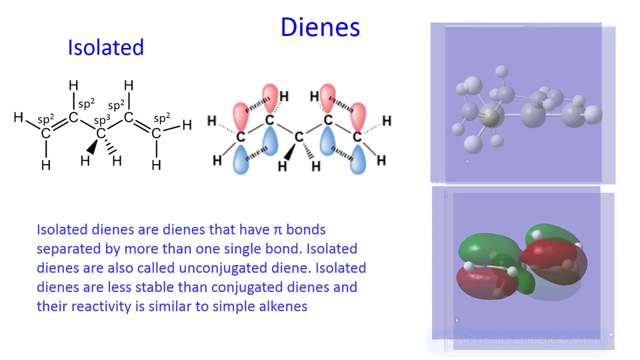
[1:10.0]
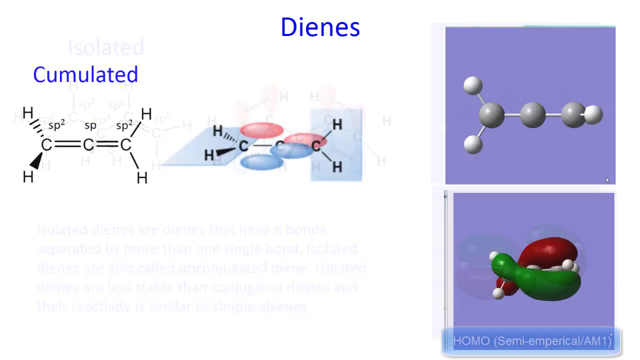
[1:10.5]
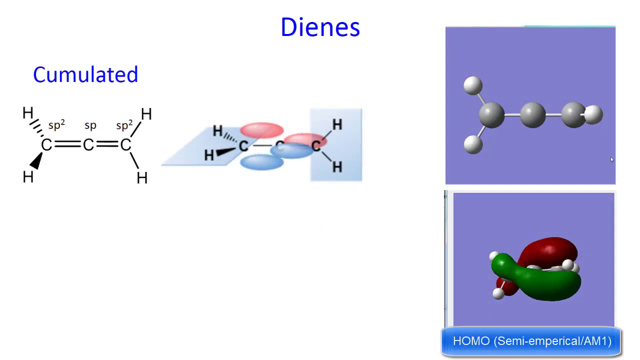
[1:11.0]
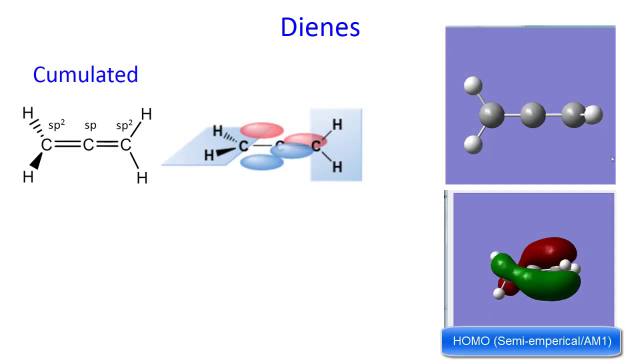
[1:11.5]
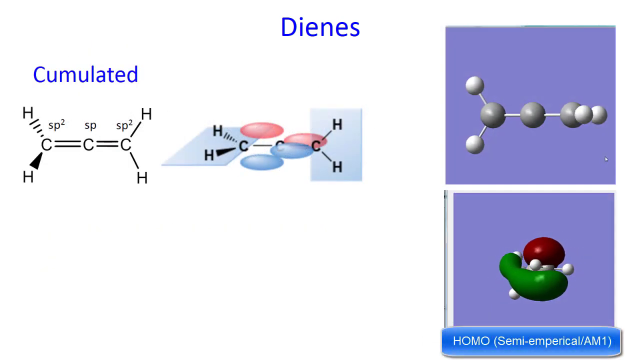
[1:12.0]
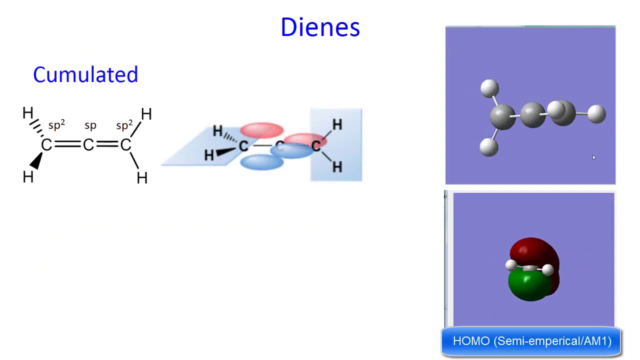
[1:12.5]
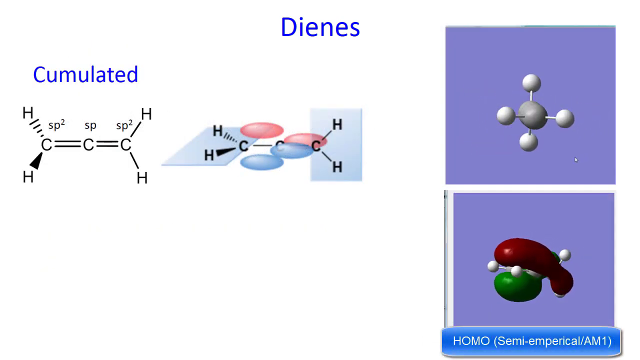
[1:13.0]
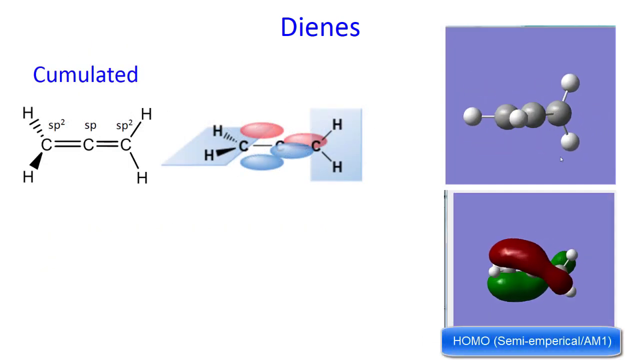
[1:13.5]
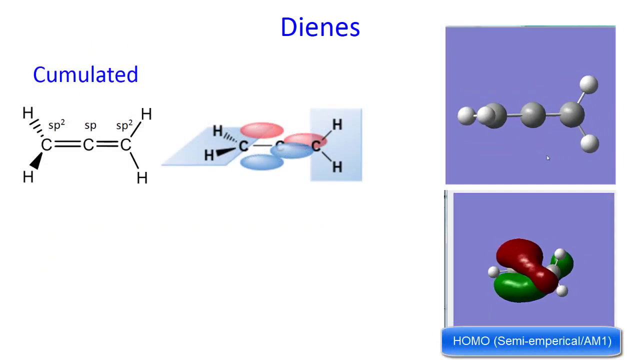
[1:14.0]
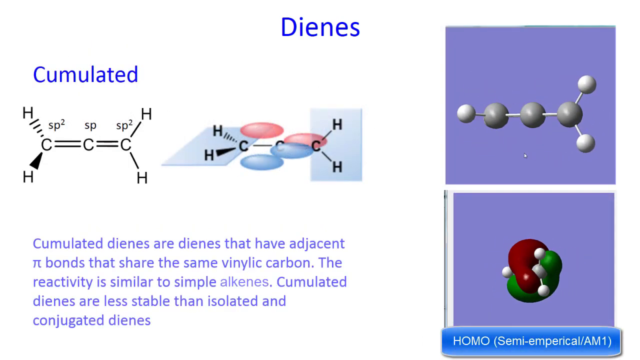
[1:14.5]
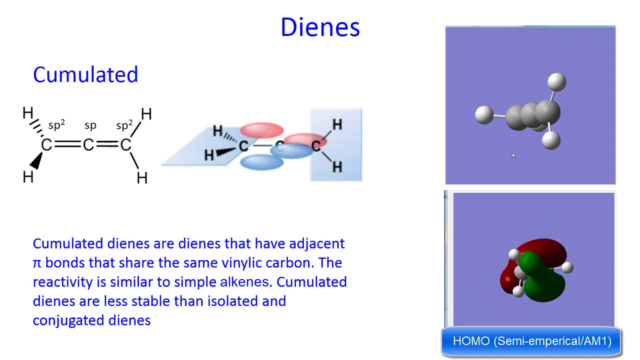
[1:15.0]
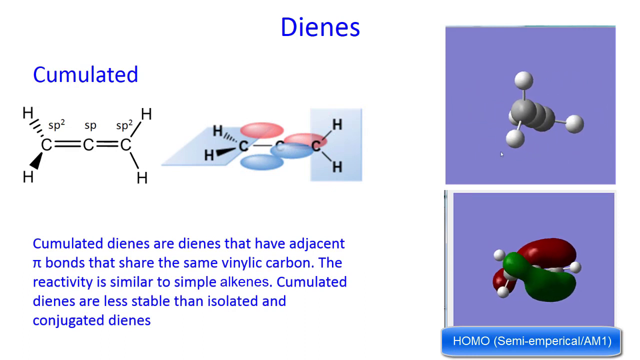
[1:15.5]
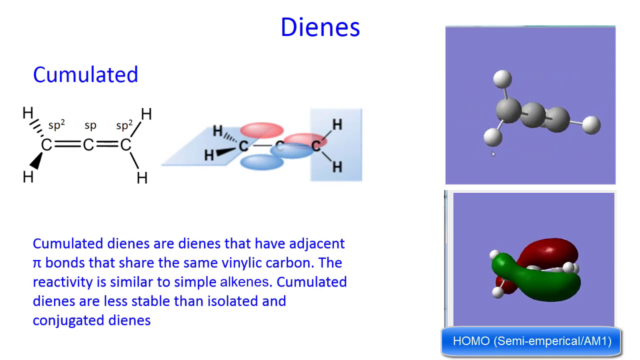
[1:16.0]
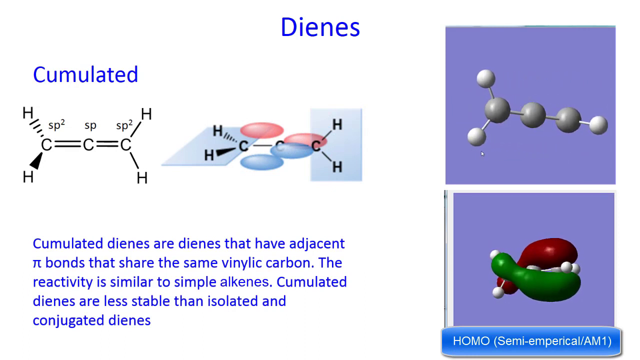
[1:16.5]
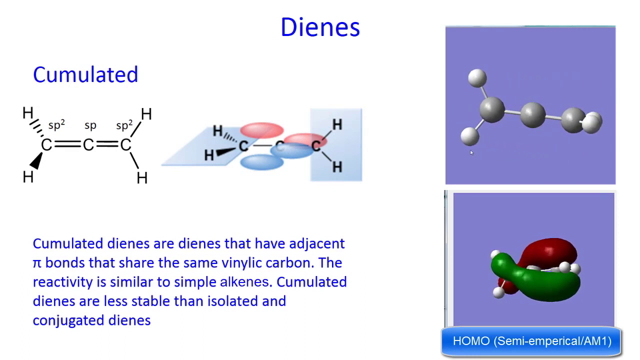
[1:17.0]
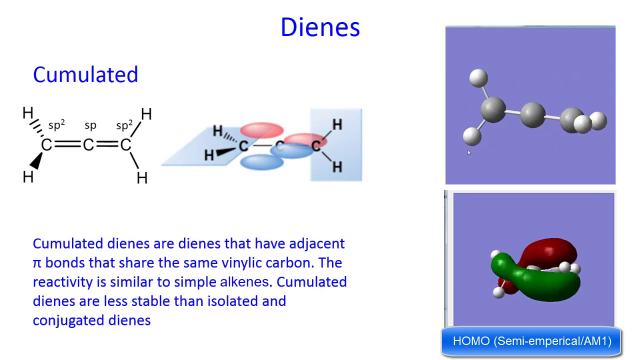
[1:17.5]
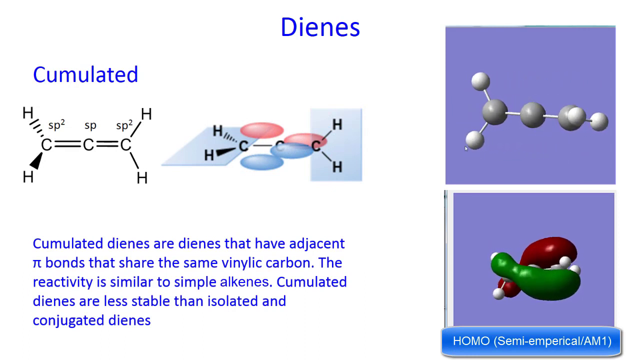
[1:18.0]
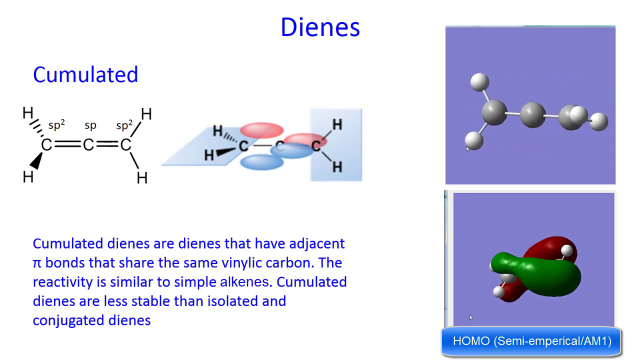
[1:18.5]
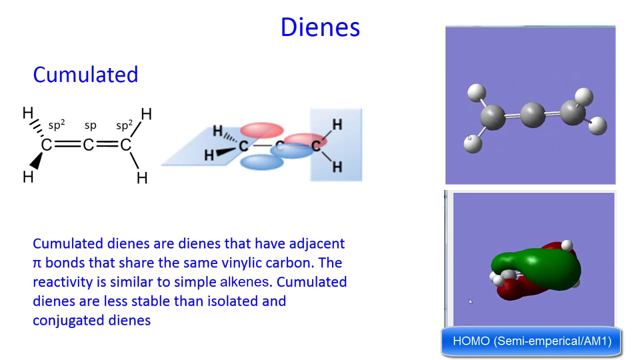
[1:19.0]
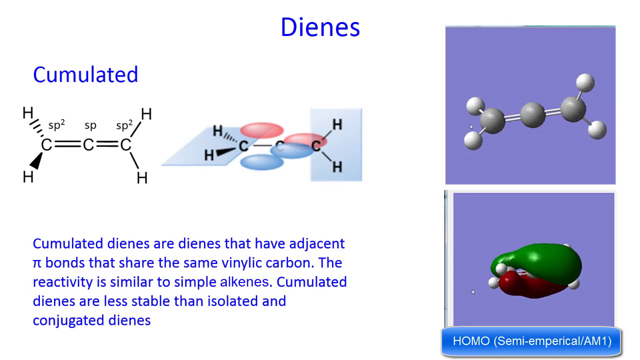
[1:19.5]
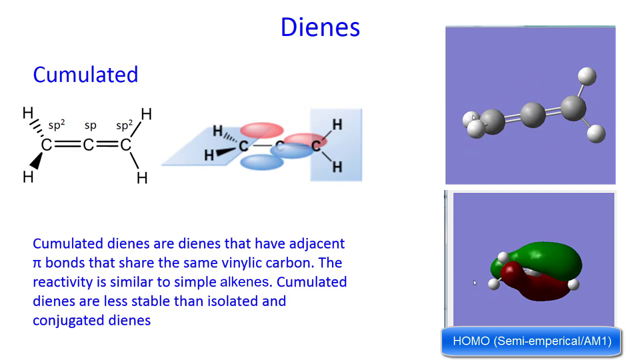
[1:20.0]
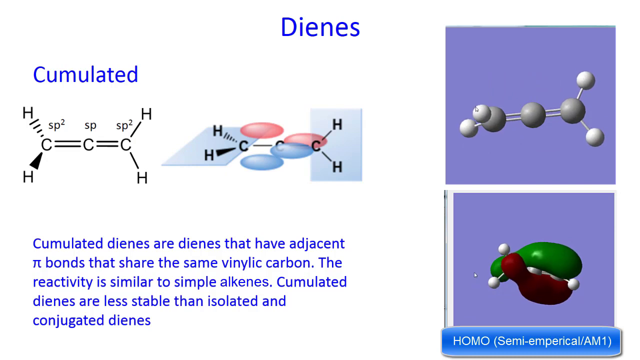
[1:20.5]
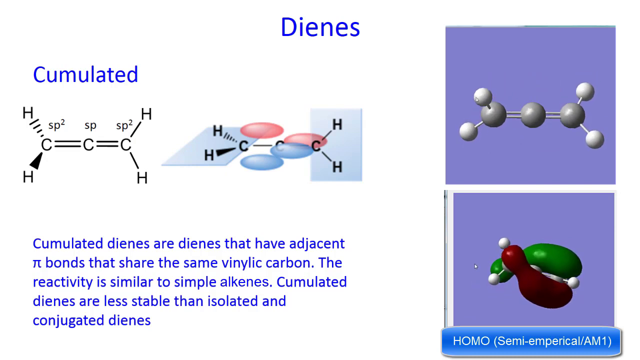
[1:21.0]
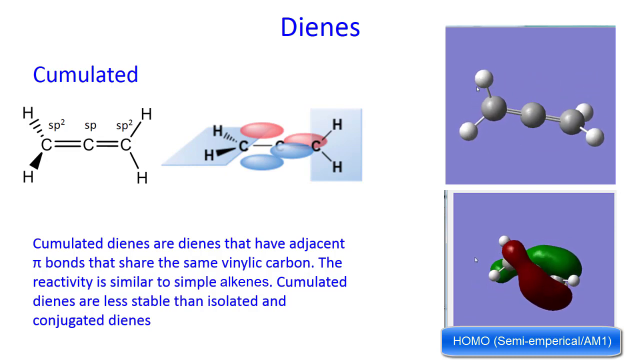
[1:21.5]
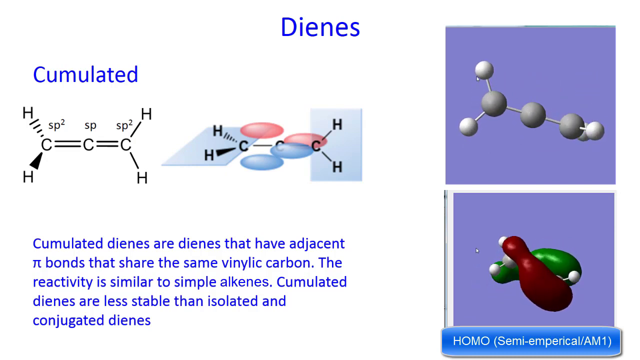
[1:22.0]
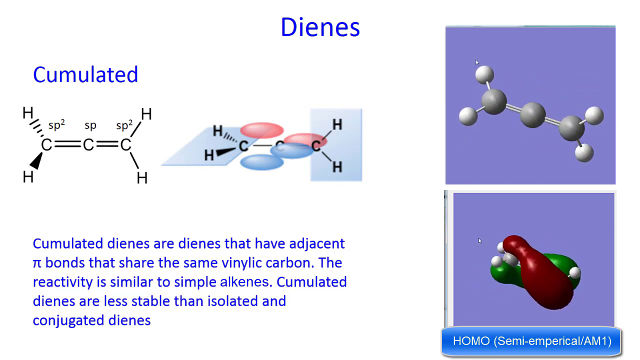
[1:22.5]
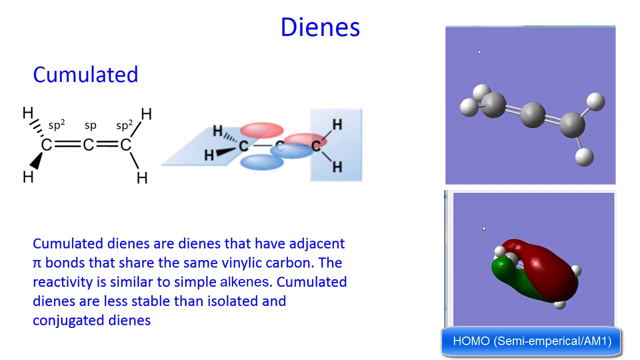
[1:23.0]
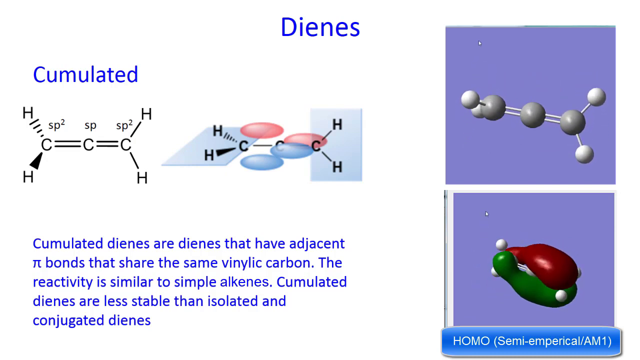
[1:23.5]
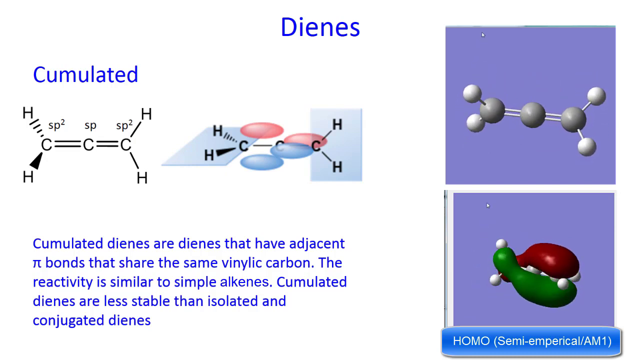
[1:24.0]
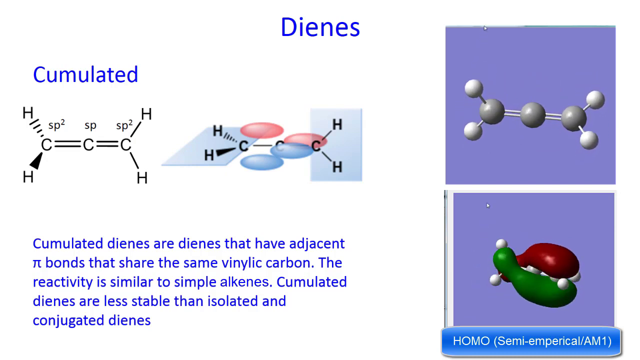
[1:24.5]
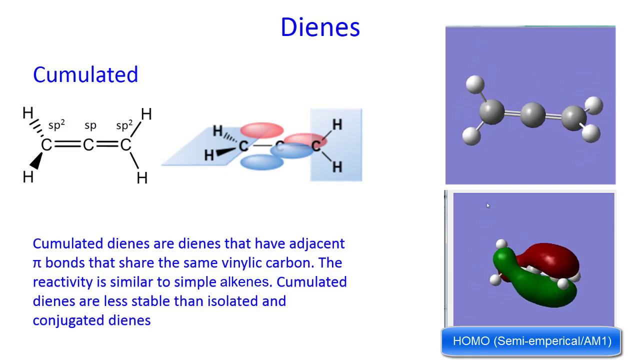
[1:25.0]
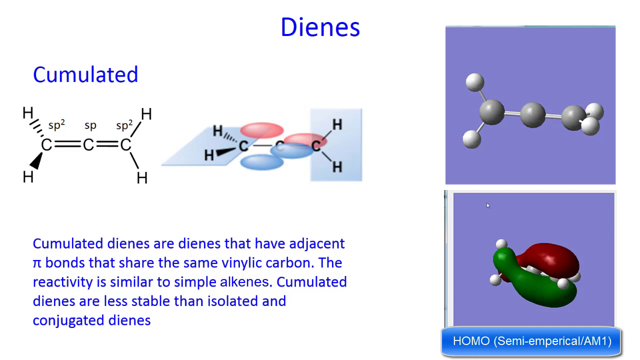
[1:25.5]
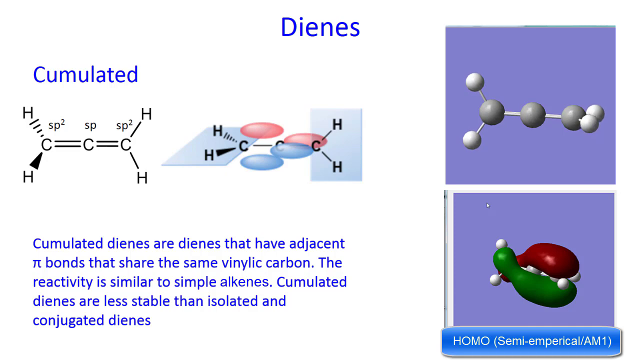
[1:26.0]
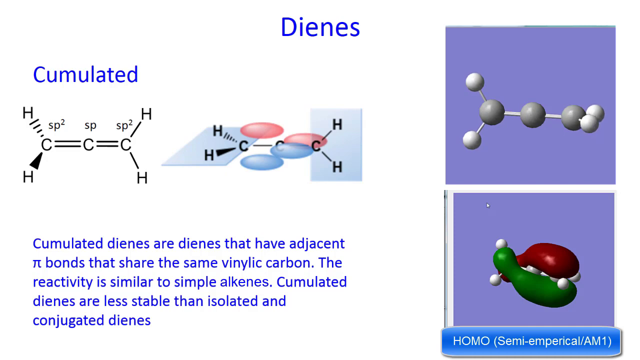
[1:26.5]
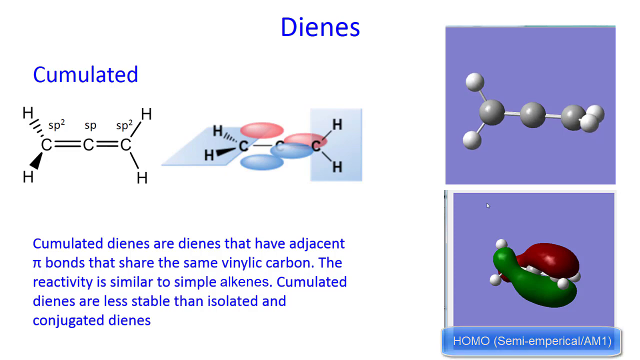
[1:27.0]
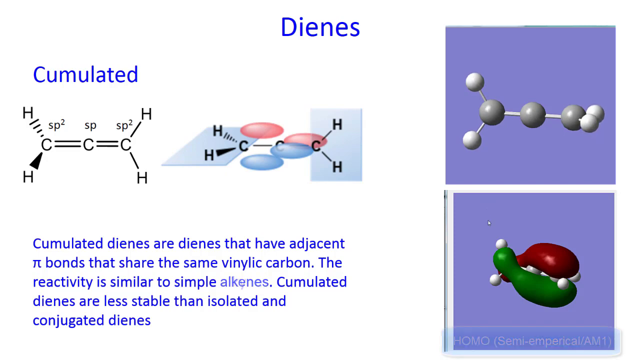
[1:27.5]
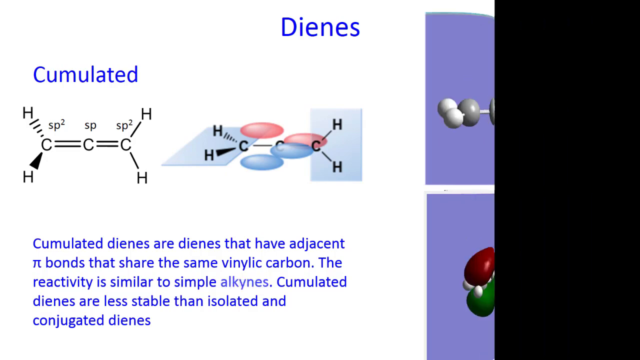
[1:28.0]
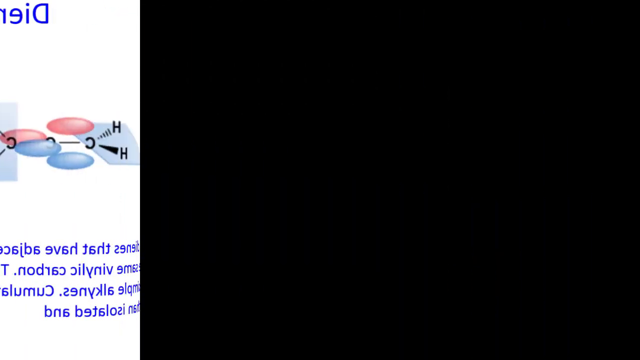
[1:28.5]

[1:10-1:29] Text on isolated dienes states that they are also called unconjugated dienes, are less stable than conjugated dienes, and have reactivity similar to simple alkenes. Labels for simple alkenes and conjugated dienes appear. A section on cumulated dienes describes them as dienes with adjacent bonds that share the same vinylic carbon, with reactivity similar to simple alkenes, and states that "cumulated dienes are less stable than isolated and conjugated dienes." Representations of the molecules, made of carbon and hydrogen, remain on screen.